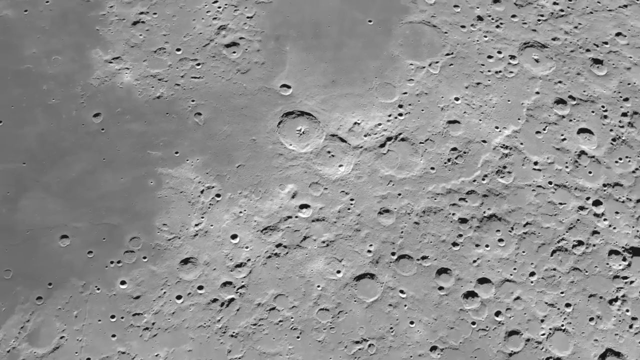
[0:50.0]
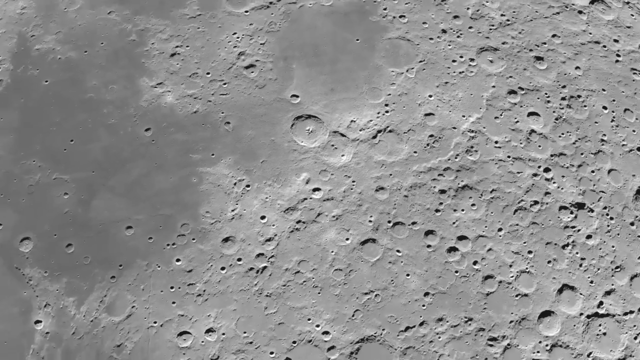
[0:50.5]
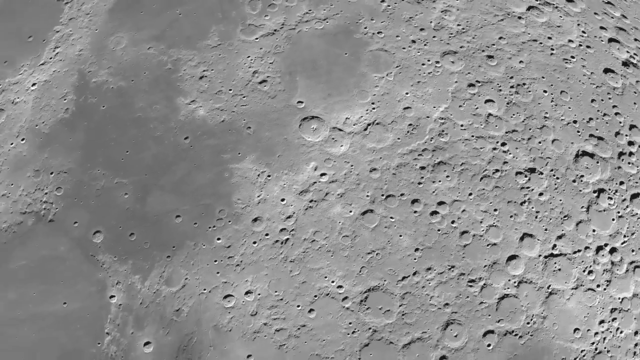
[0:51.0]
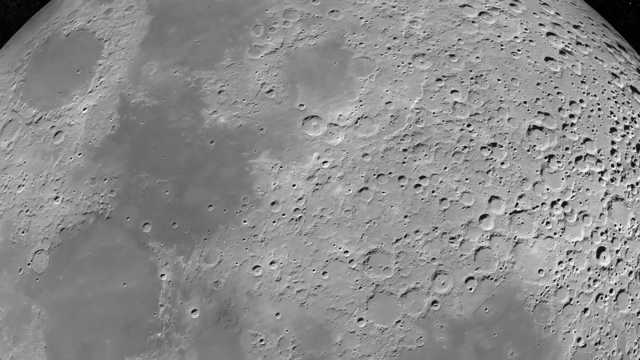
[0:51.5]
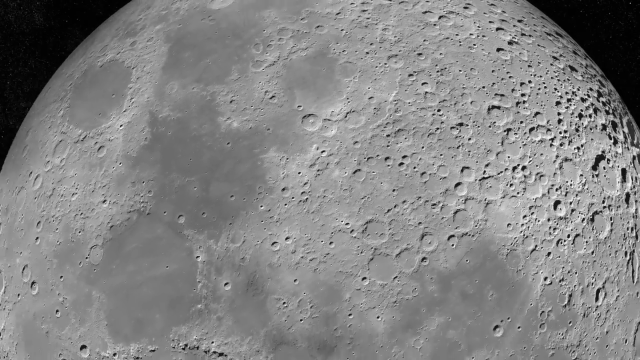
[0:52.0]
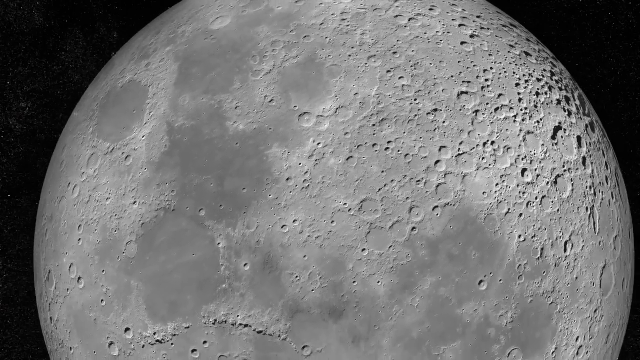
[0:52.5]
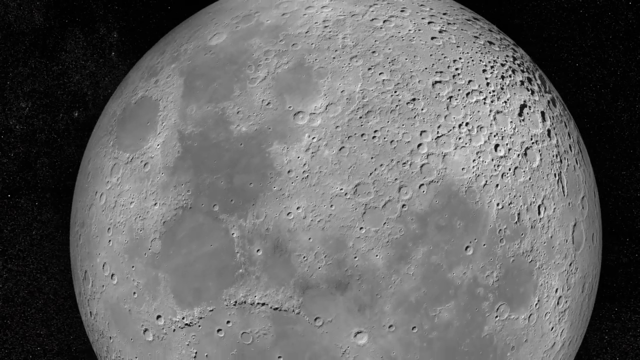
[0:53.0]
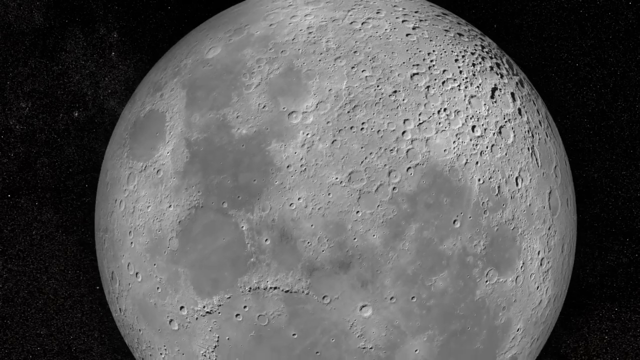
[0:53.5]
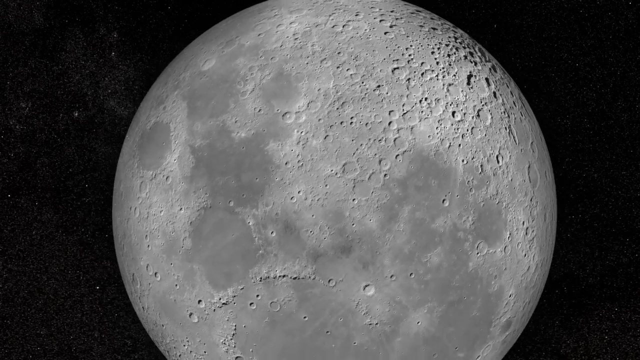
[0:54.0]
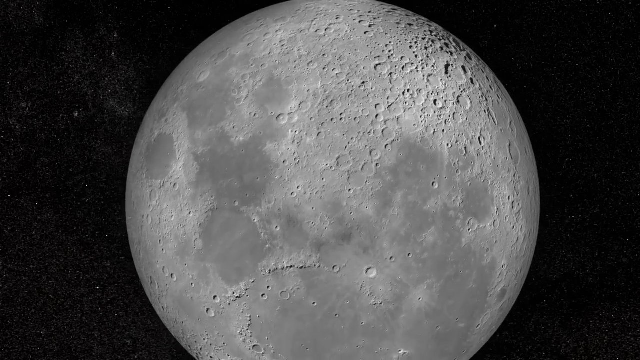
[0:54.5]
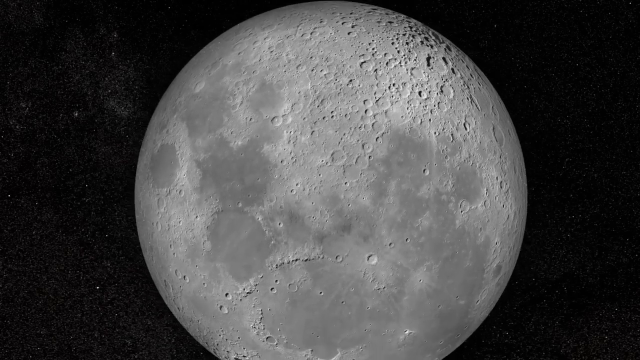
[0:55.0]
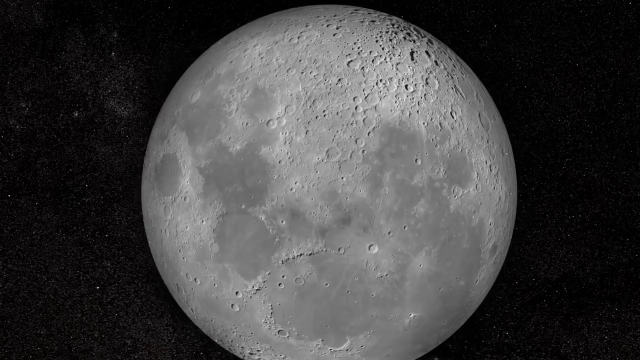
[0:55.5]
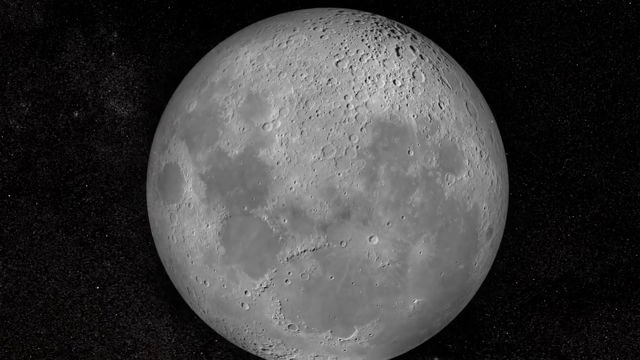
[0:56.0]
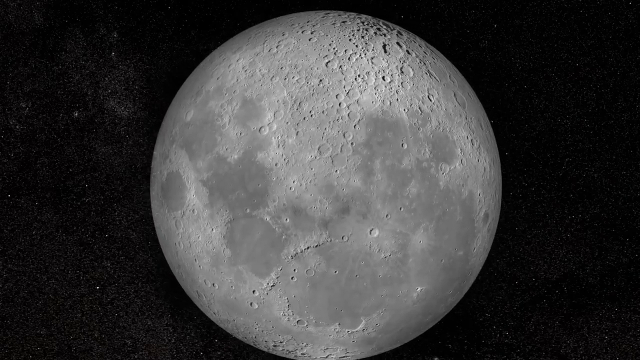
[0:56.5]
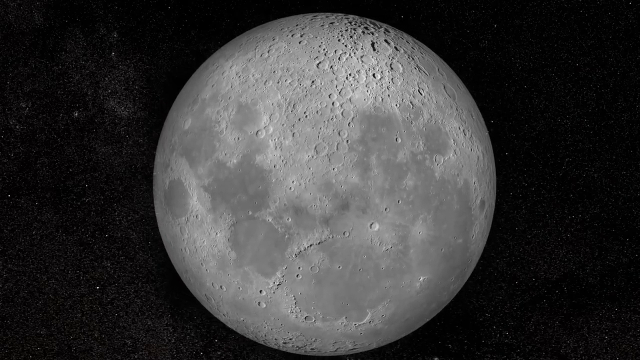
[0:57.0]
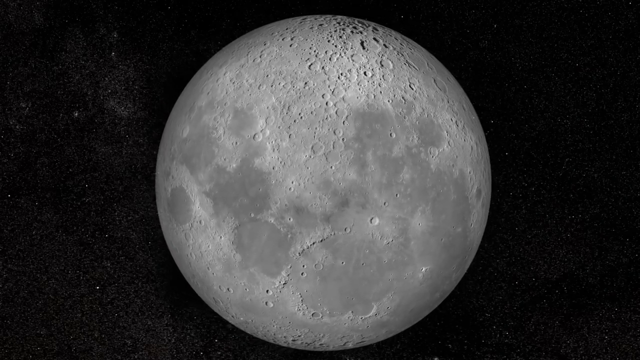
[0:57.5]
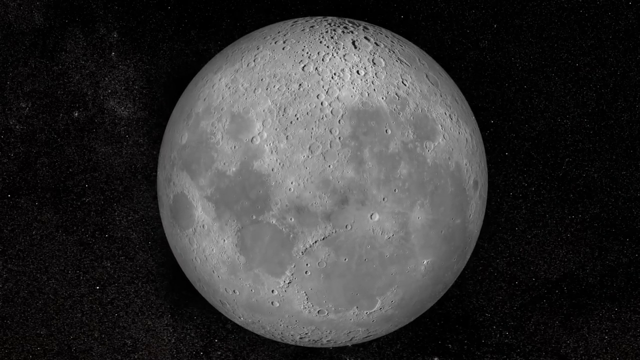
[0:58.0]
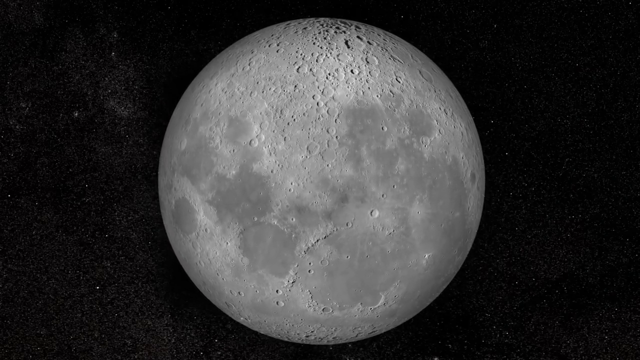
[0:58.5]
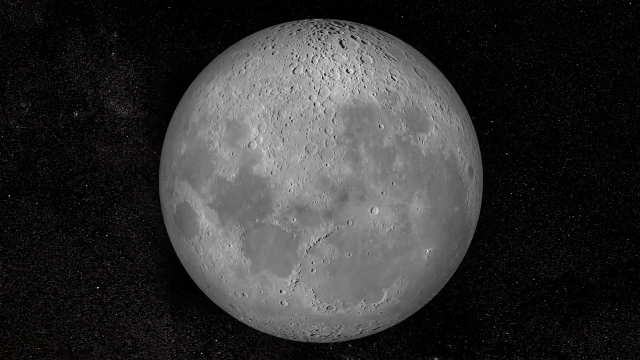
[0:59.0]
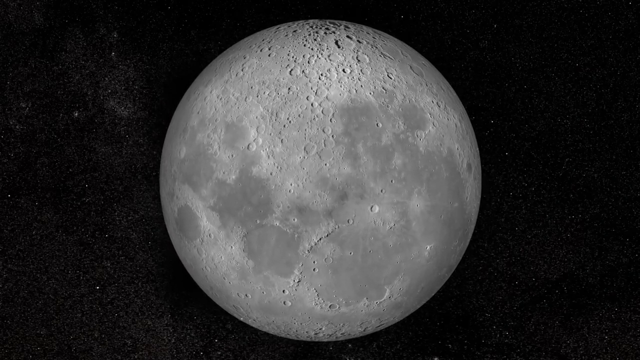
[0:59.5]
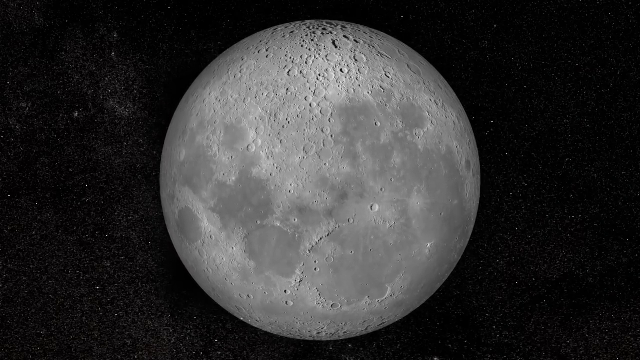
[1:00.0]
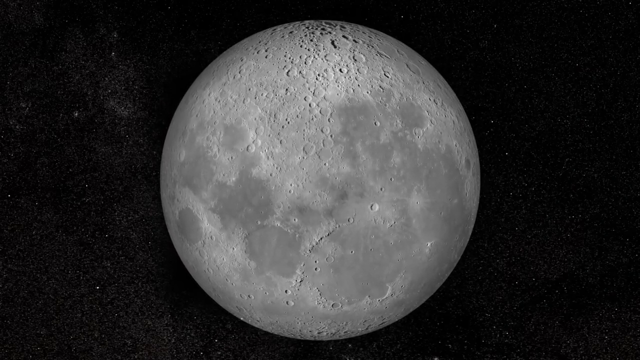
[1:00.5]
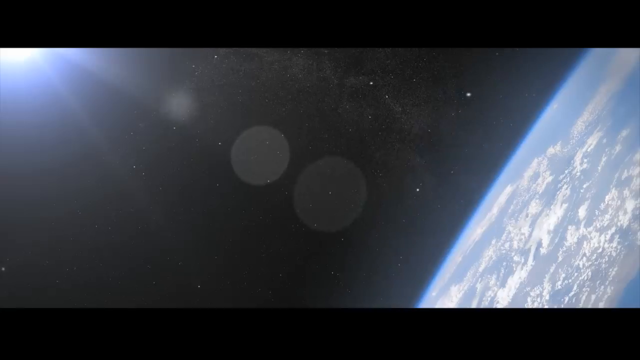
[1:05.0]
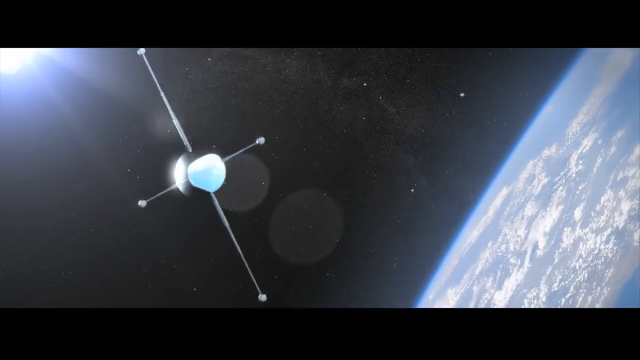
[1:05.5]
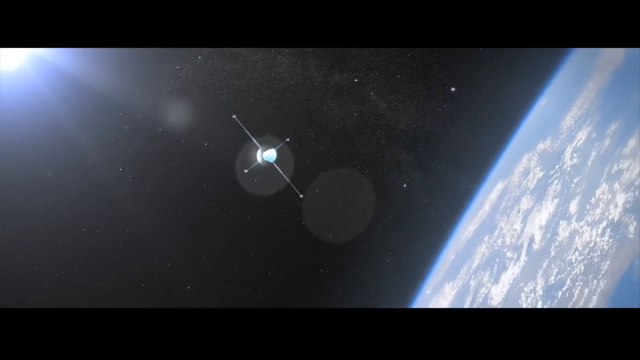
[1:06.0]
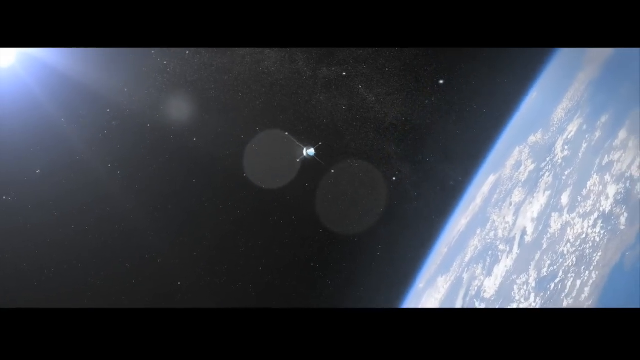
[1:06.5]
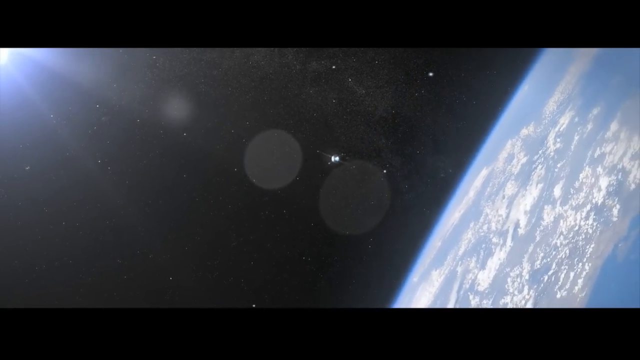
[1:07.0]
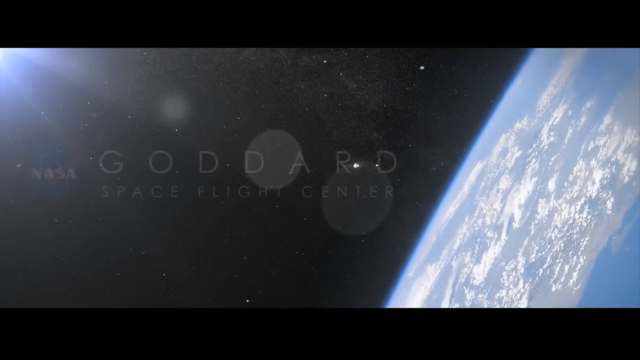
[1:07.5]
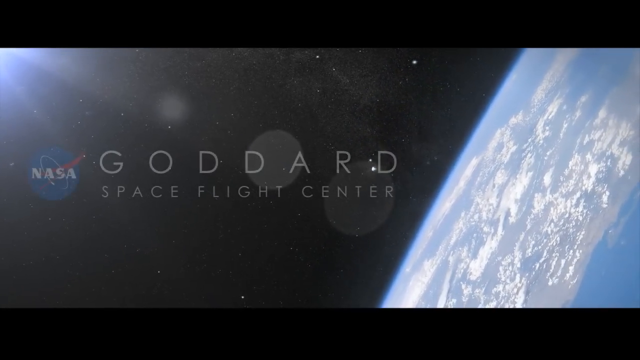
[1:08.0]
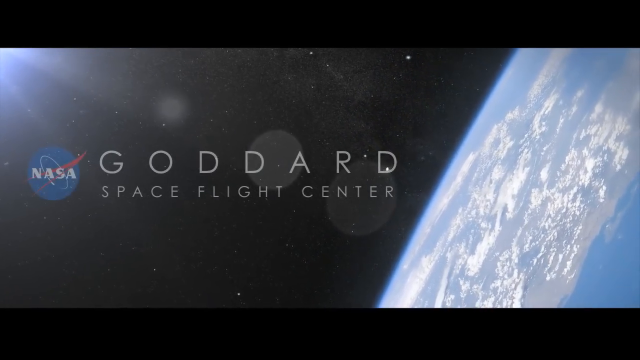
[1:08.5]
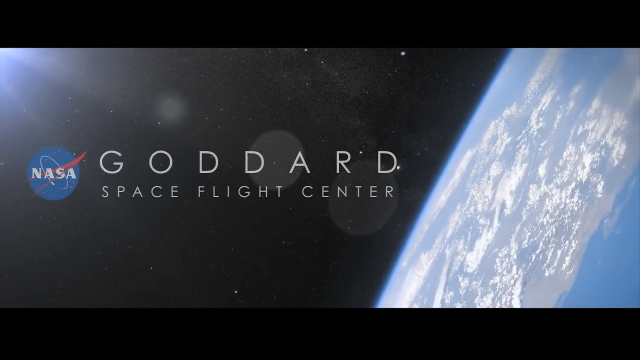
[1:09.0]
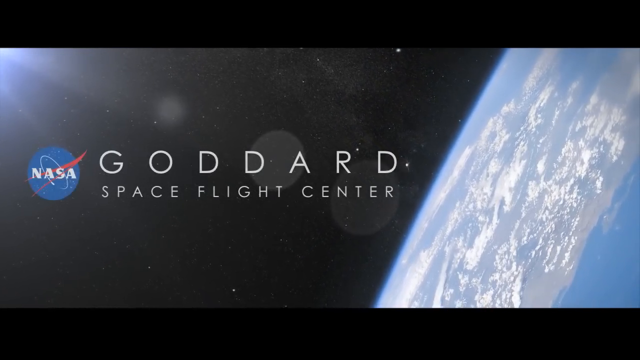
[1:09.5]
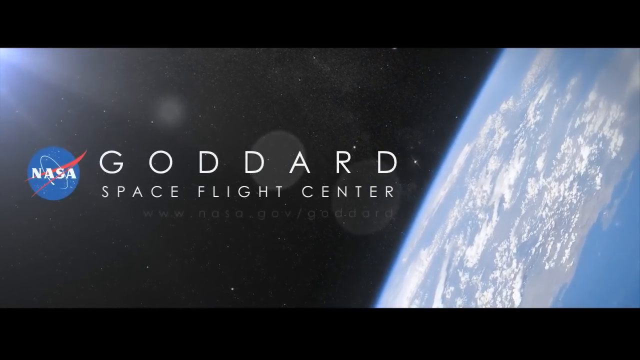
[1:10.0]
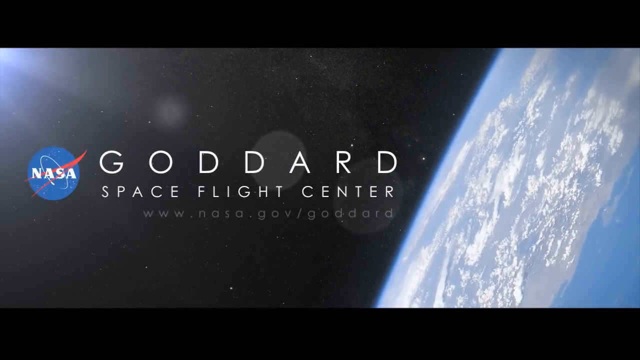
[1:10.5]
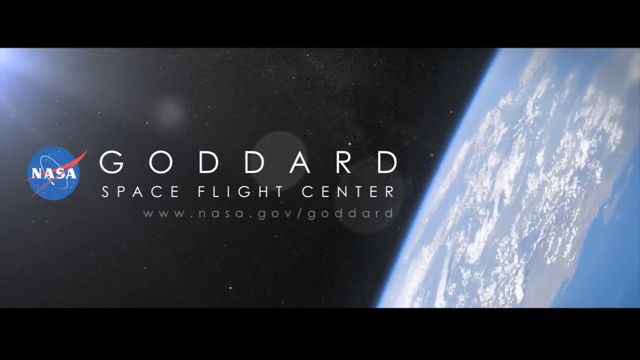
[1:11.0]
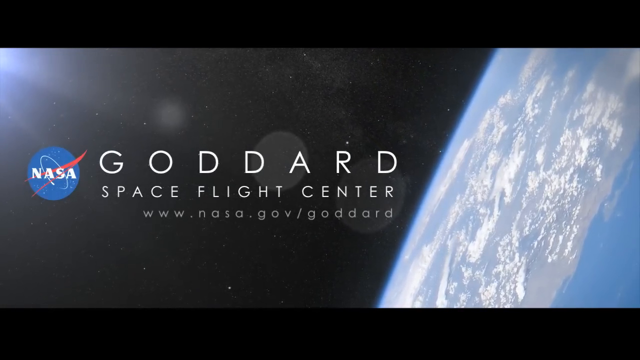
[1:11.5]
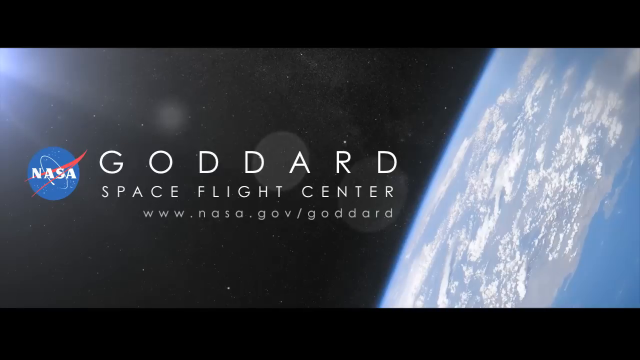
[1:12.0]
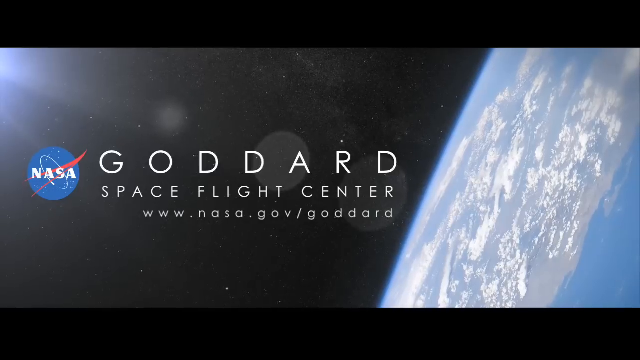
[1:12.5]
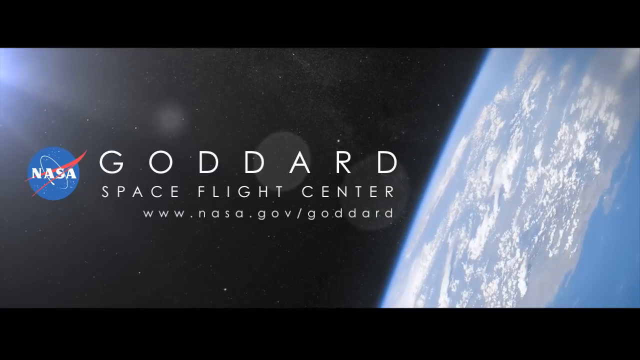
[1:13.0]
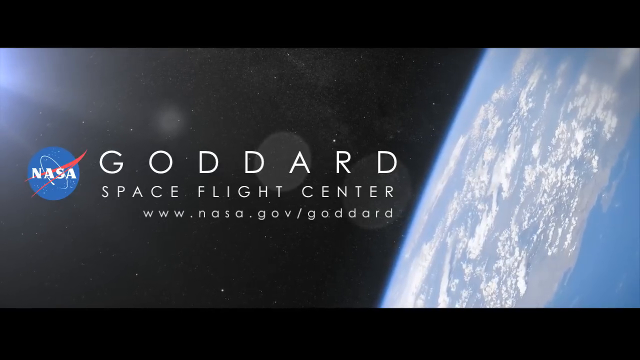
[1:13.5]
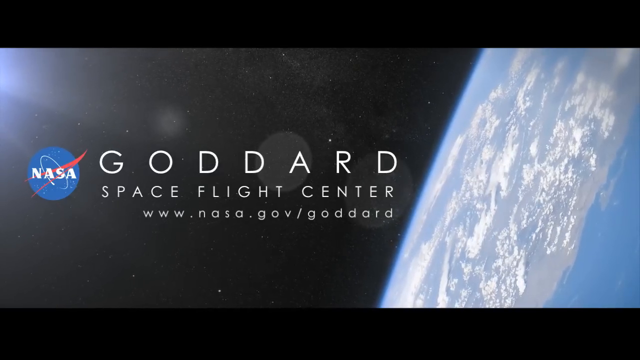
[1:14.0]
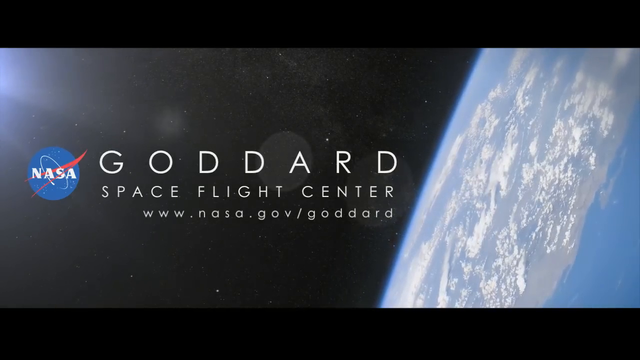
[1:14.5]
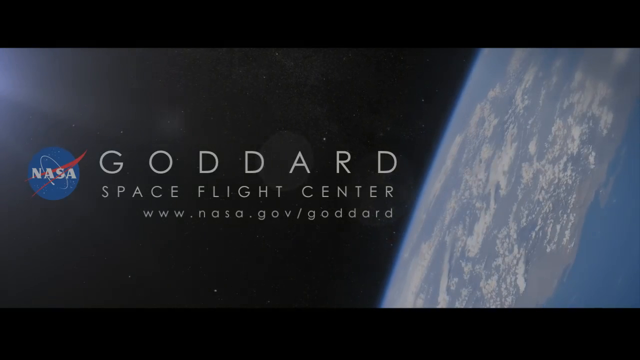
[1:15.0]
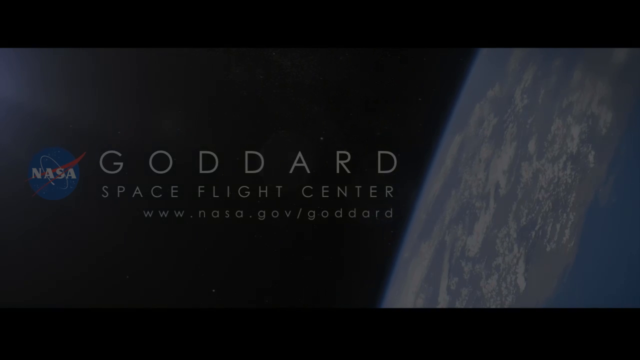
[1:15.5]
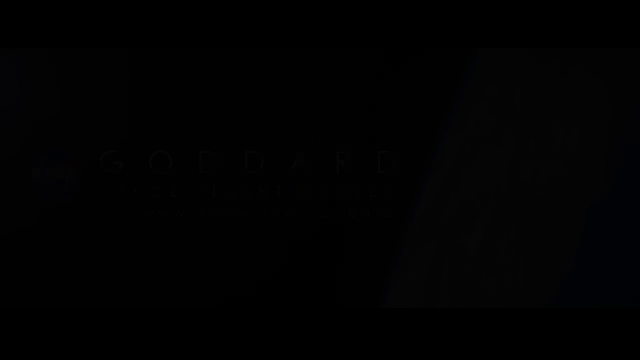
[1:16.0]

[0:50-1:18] A still image highlights an area of the moon with many craters from impact events, and the camera zooms out. The area looks to be the top right portion of the moon, as seen when the camera fully zooms out to a static picture of the moon on a black background with thousands of stars visible as tiny points of light. The moon shows flat areas as well as indented areas from craters. The view stays on the moon for two seconds before a transition to a metal satellite with four antennas flying towards Earth. A bright sun is in the upper left corner, and Earth is on the right side, showing blue swaths of ocean, white clouds and parts of land behind the clouds. A label with the NASA logo and the words "Goddard Space Flight Center" appears in the middle space beside Earth.